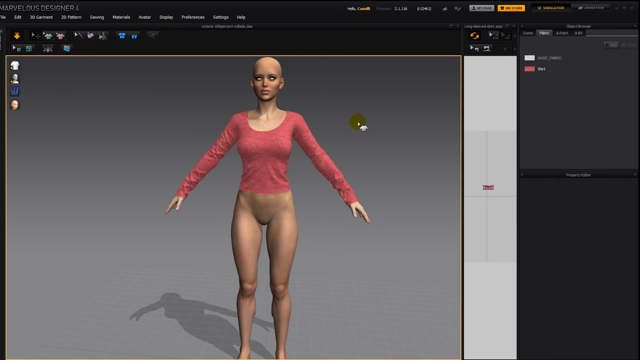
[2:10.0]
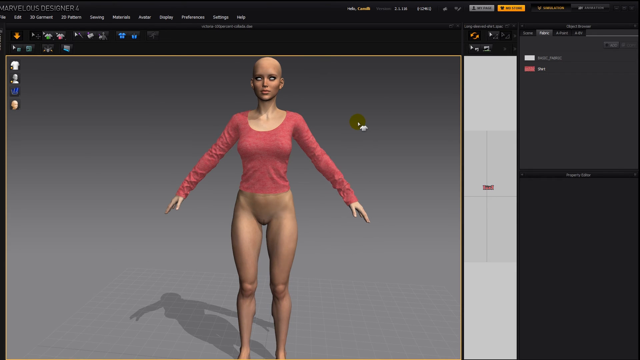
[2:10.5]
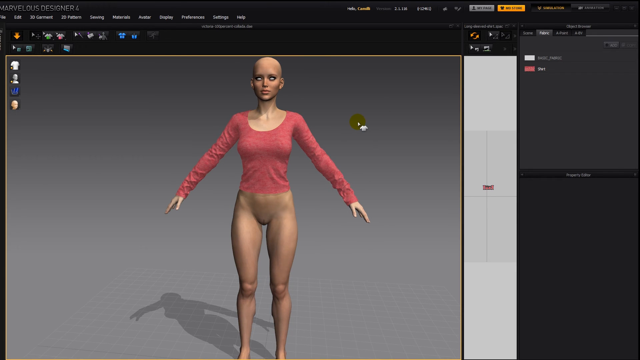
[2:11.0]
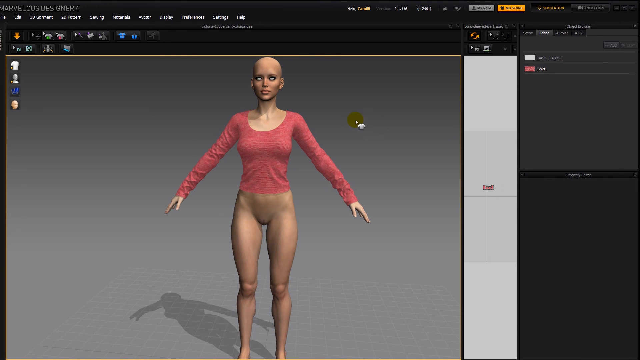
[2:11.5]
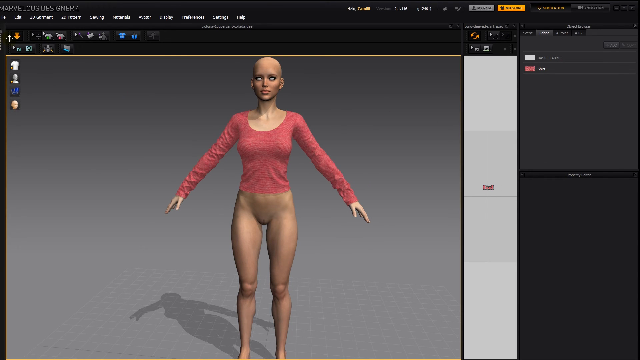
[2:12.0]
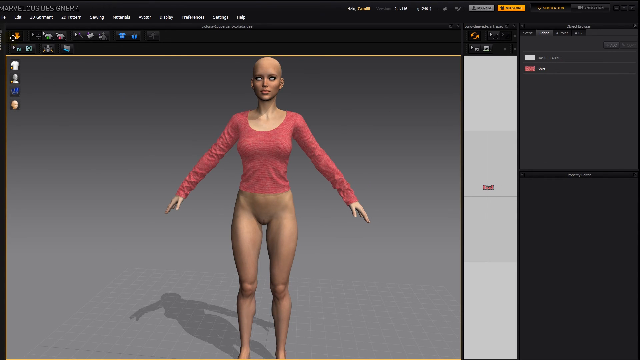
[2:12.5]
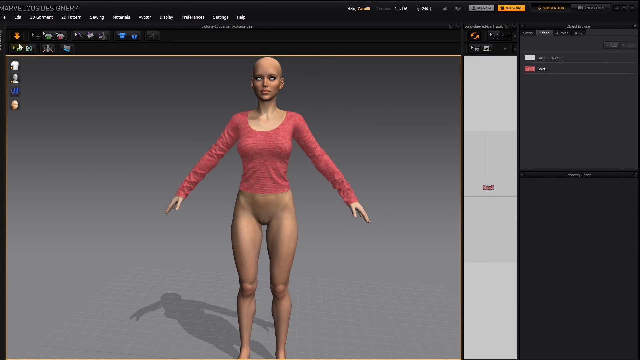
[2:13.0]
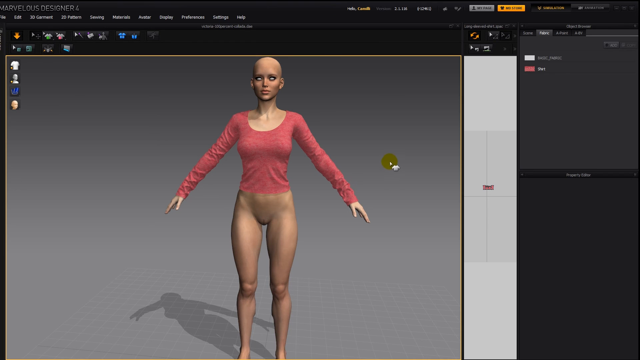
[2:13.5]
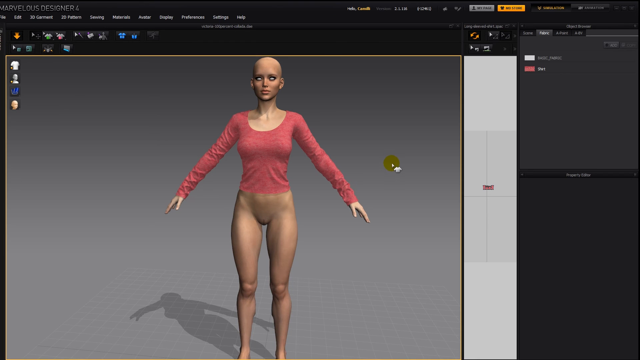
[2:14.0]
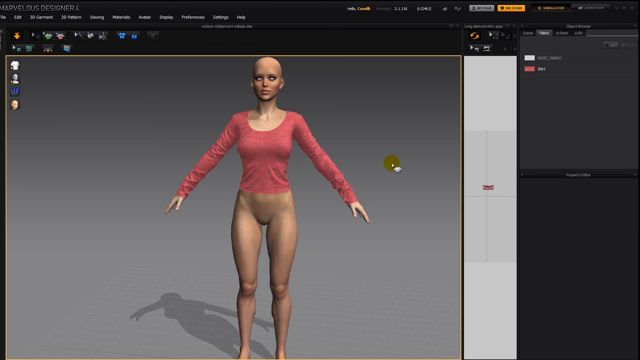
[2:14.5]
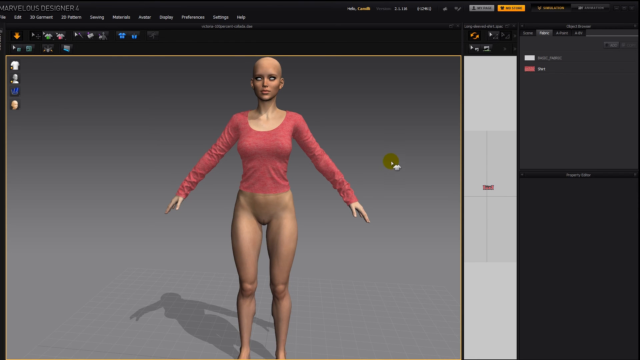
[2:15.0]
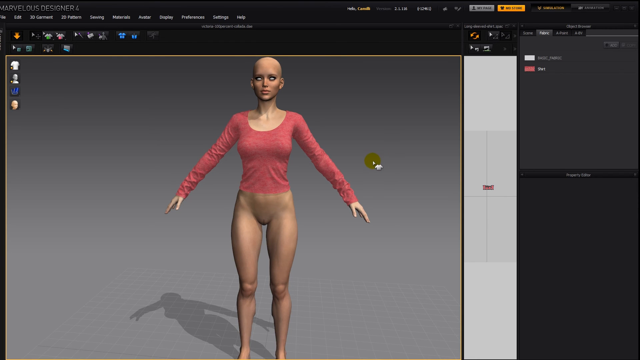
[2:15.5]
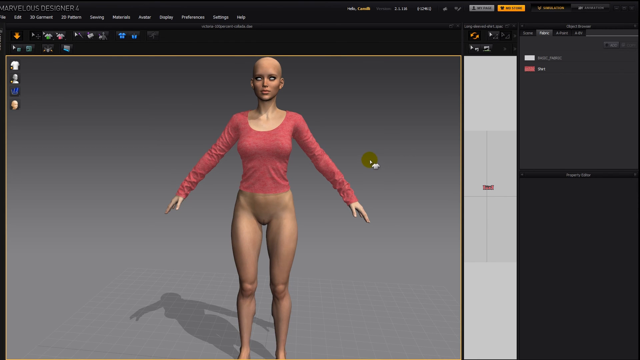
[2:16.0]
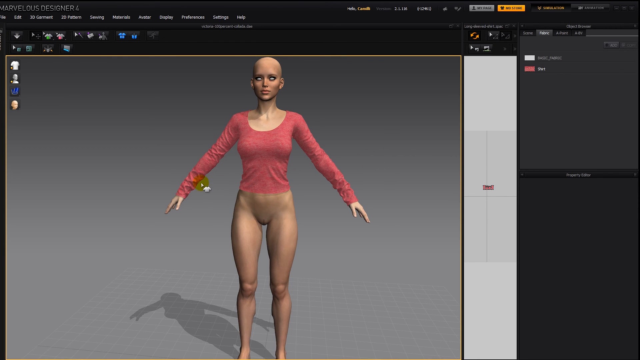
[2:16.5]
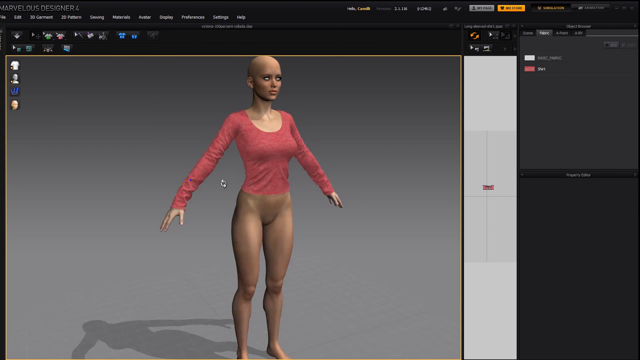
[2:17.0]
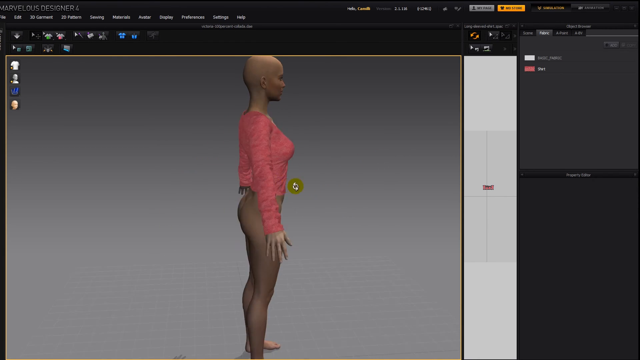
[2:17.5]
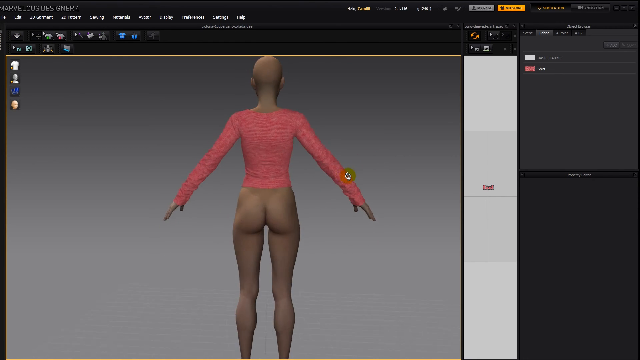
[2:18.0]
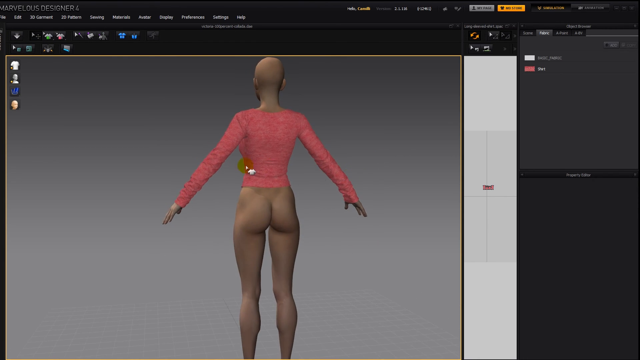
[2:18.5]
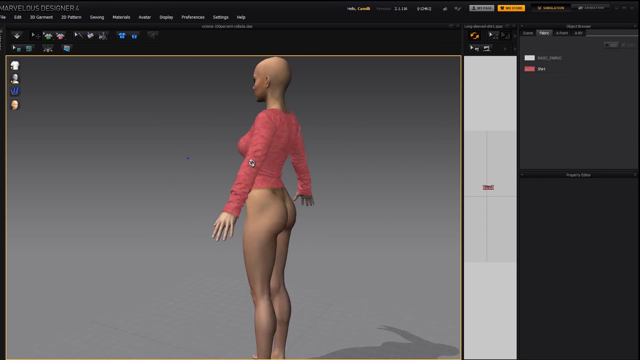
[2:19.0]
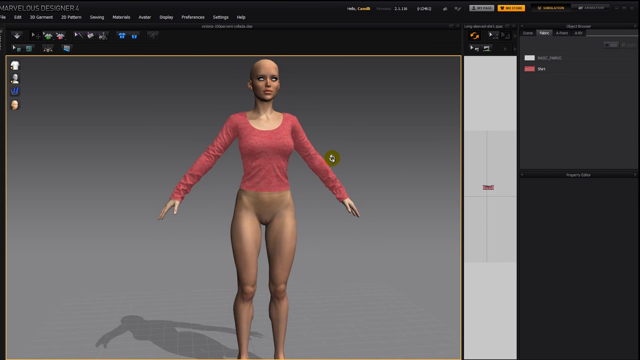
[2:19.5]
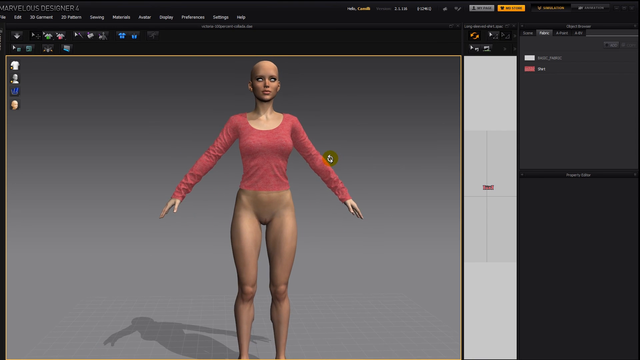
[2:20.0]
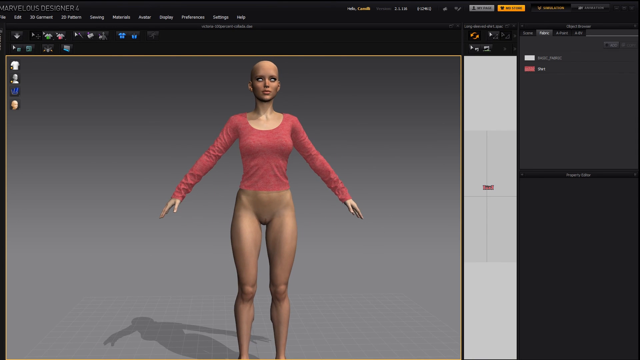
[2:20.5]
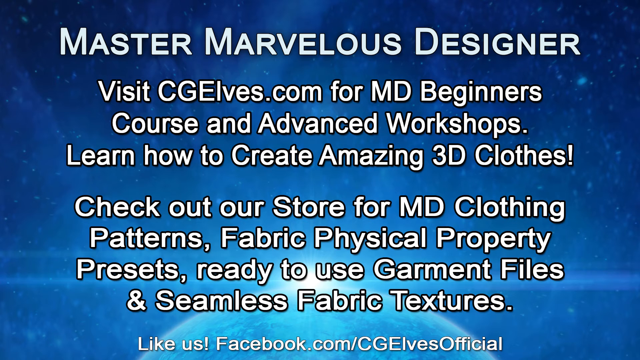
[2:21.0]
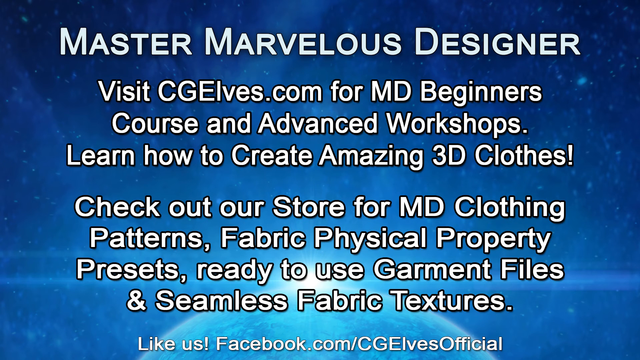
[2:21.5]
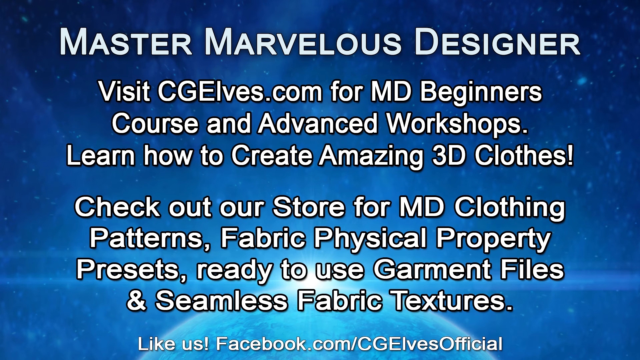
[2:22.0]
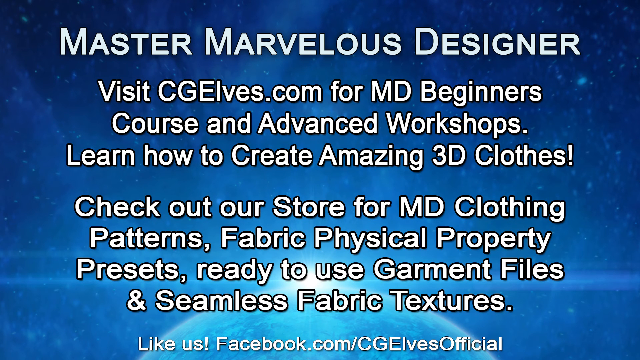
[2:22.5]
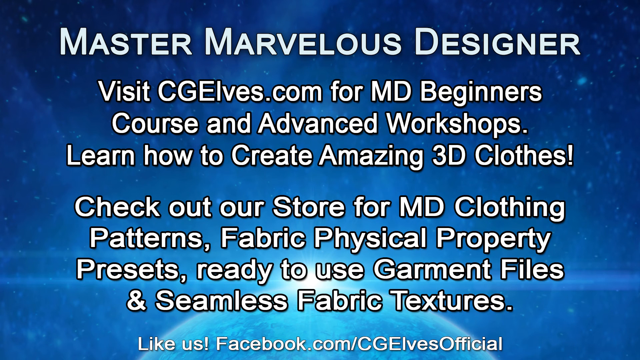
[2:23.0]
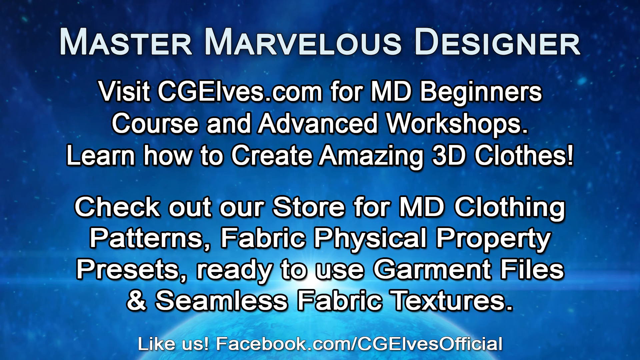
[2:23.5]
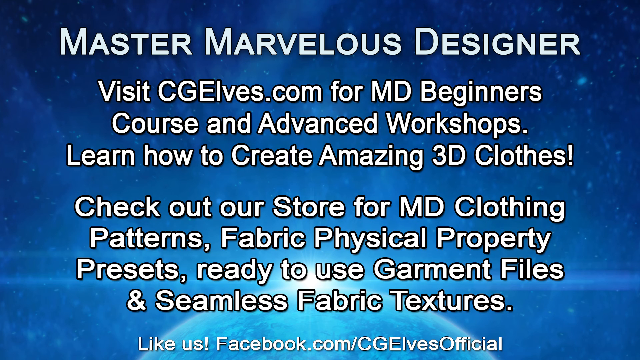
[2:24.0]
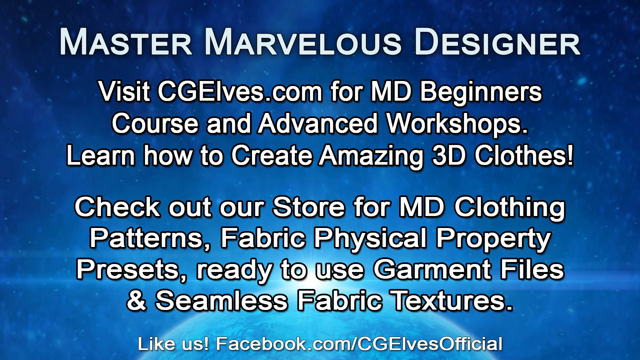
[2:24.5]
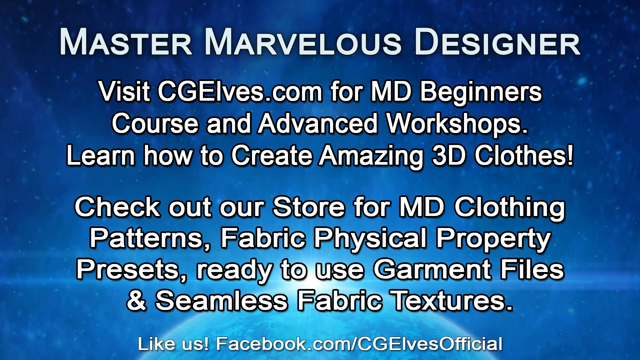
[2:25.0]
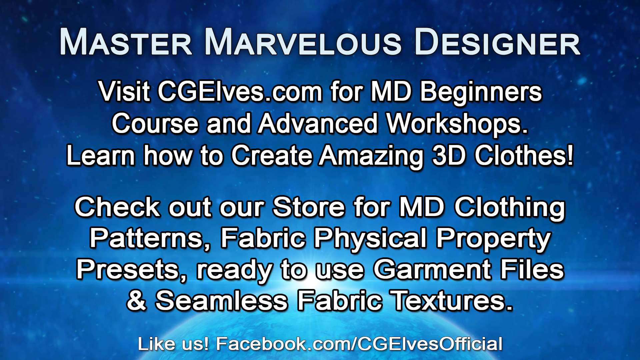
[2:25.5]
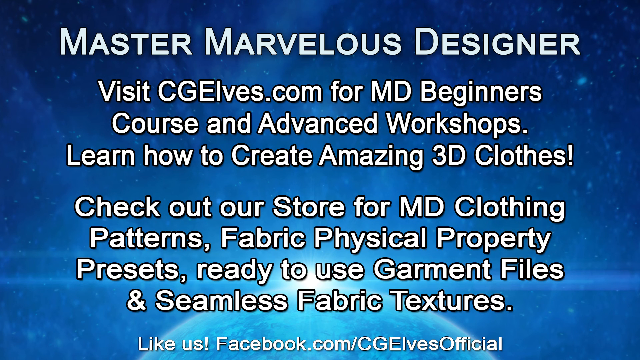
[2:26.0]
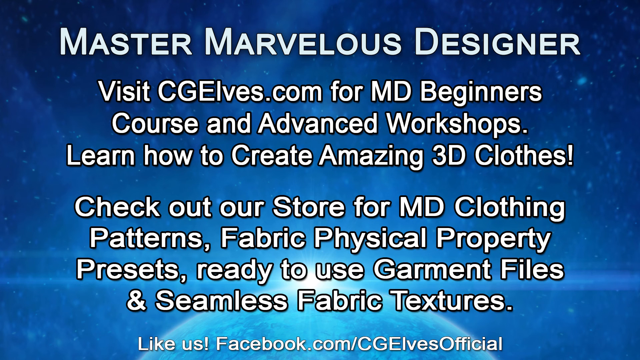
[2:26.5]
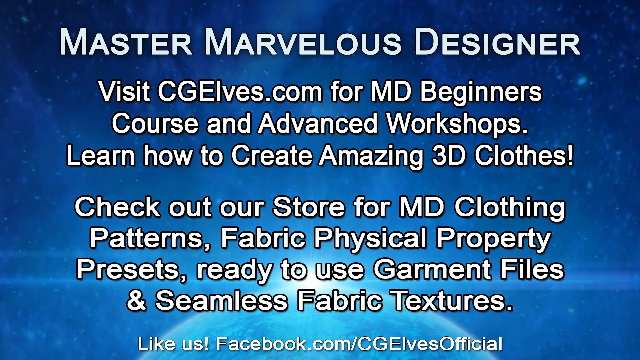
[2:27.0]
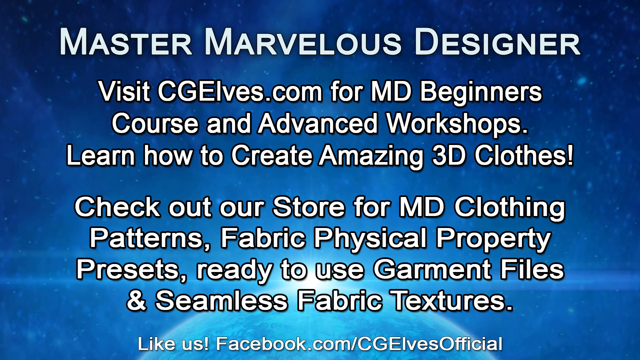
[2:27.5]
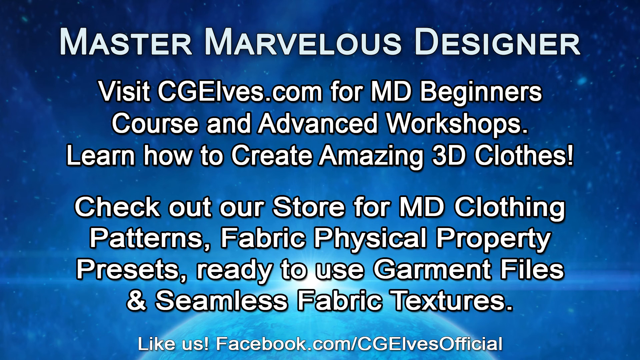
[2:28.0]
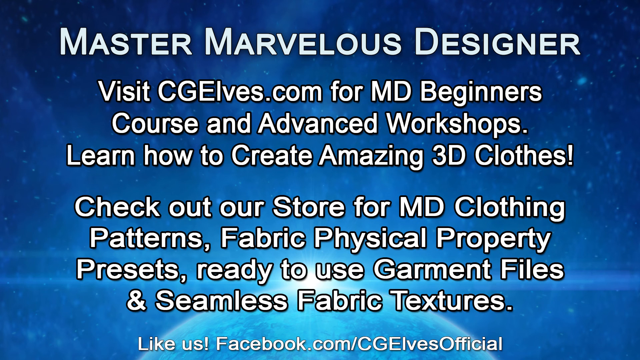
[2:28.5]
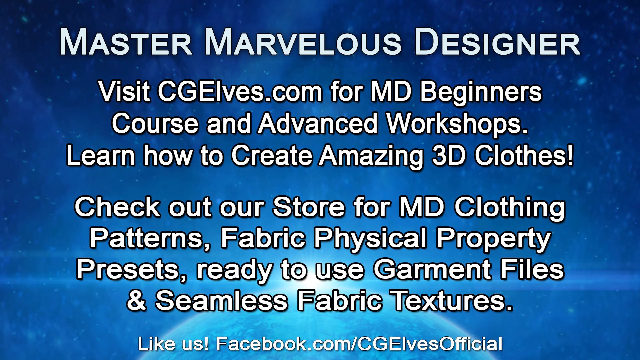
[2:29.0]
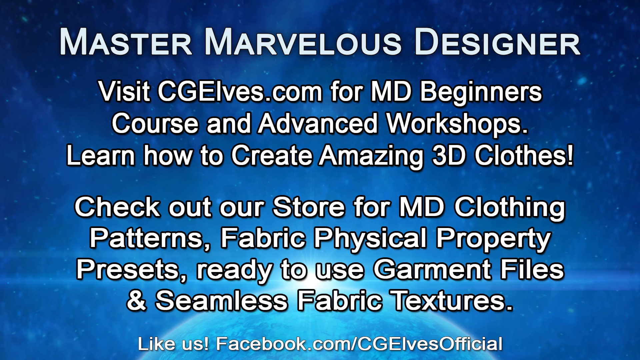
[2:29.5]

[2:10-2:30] Something in the left-hand corner is clicked, and she is turned around a little more, giving an overview of the finished result. A page then appears with the same background image as at the beginning: many stars and galaxies on a blue background, with the planet at the bottom and the Sun popping up over it. Text then says "master marvelous designer visit CGL com for MD beginners course and advanced workshops learn how to create amazing 3d clothes check out our store for MD clothing patterns fabric physical property presets ready-to-use garment files and seamless fabric textures." CG elves seems to be a training course for editing characters and fitting their clothes.